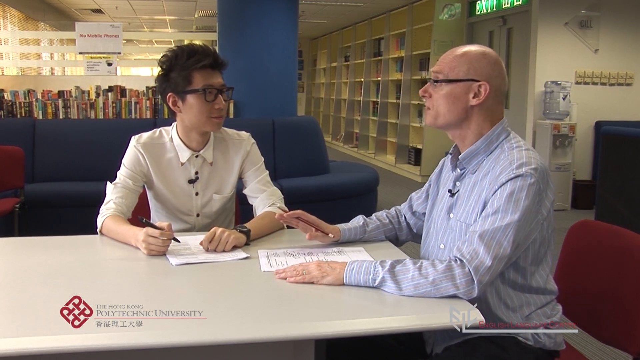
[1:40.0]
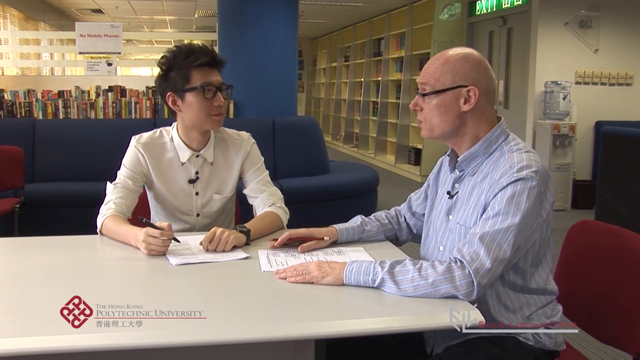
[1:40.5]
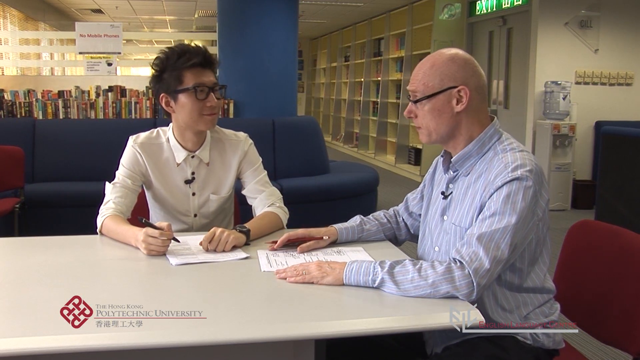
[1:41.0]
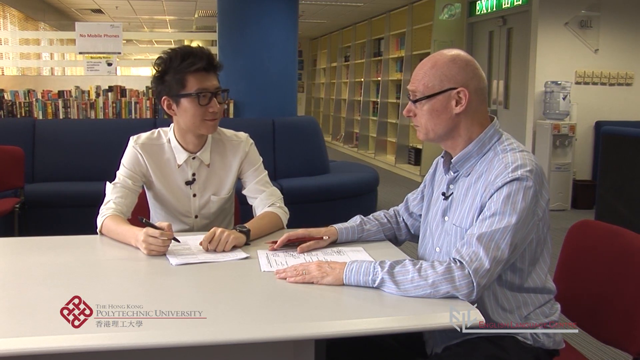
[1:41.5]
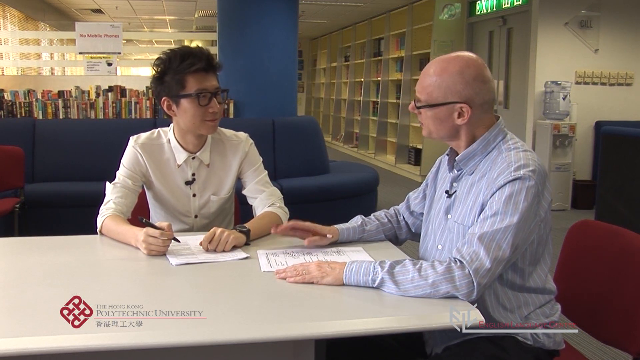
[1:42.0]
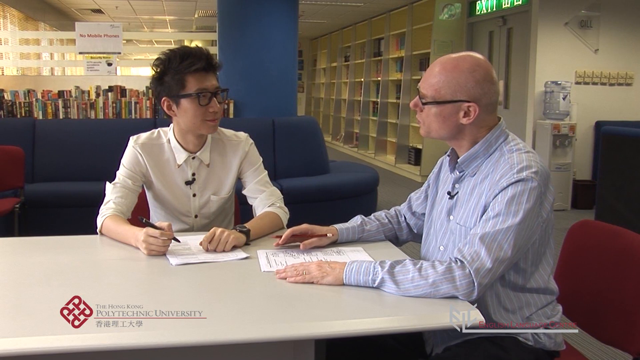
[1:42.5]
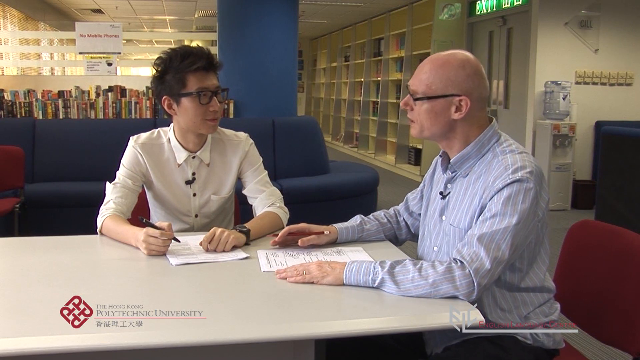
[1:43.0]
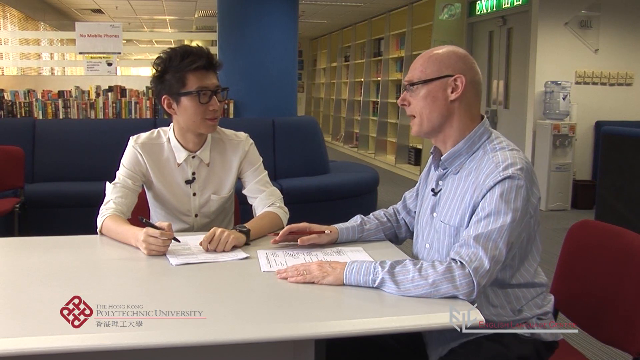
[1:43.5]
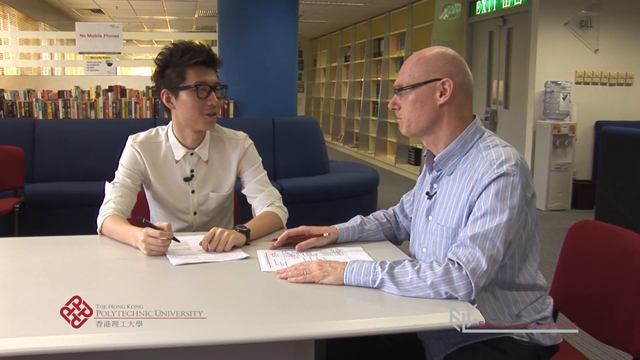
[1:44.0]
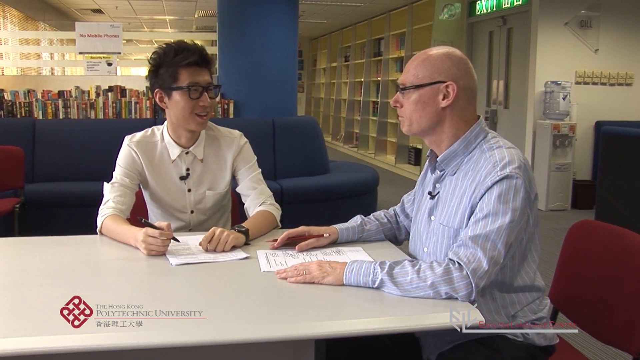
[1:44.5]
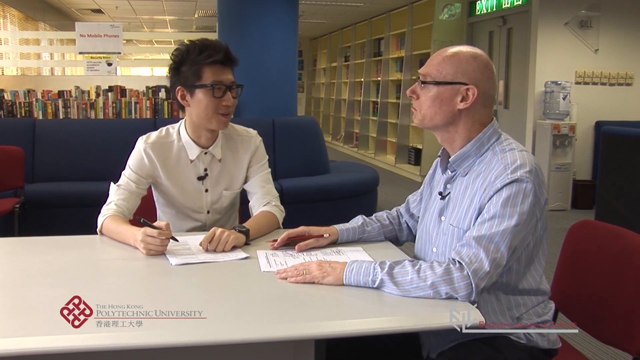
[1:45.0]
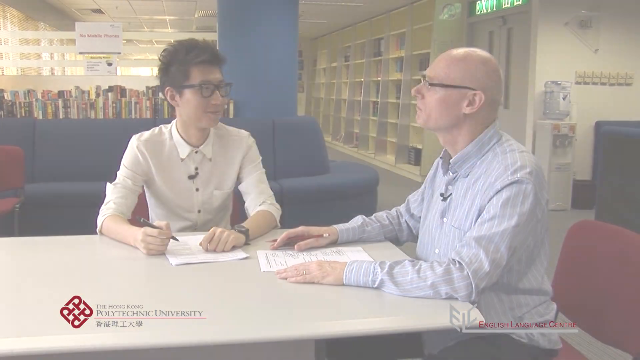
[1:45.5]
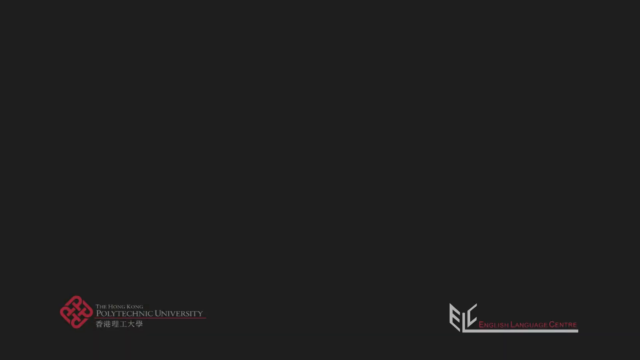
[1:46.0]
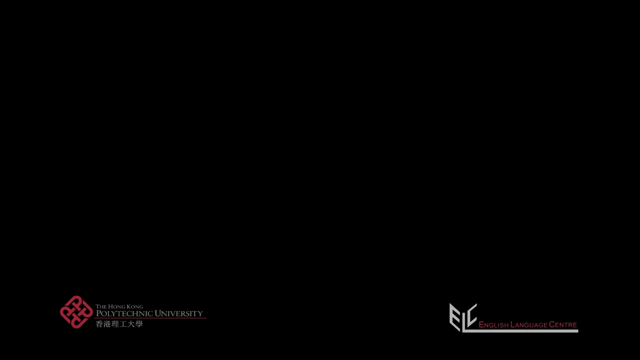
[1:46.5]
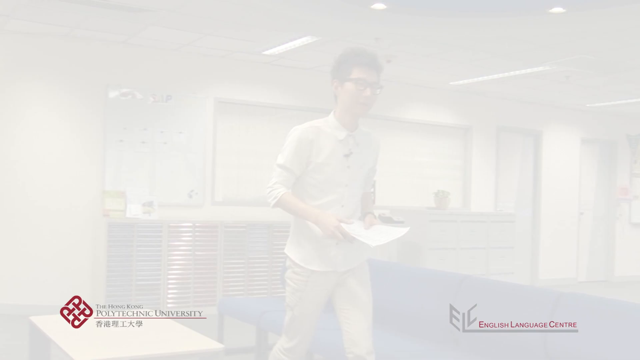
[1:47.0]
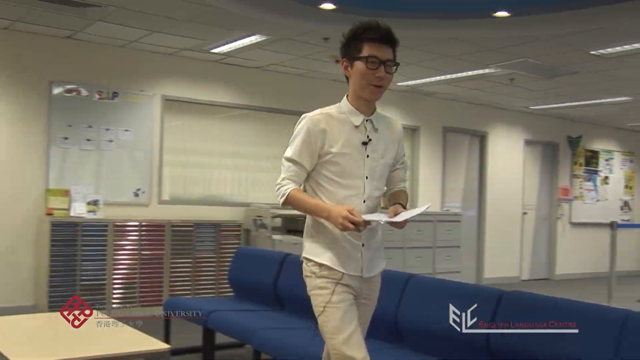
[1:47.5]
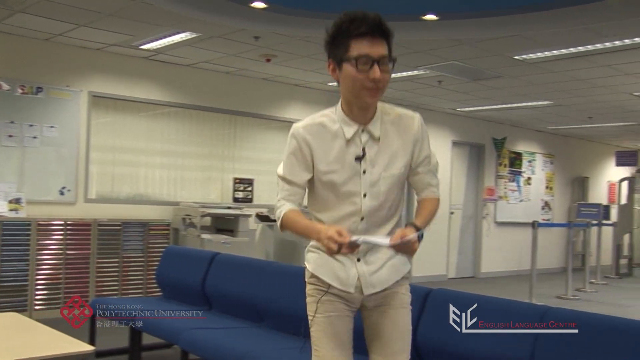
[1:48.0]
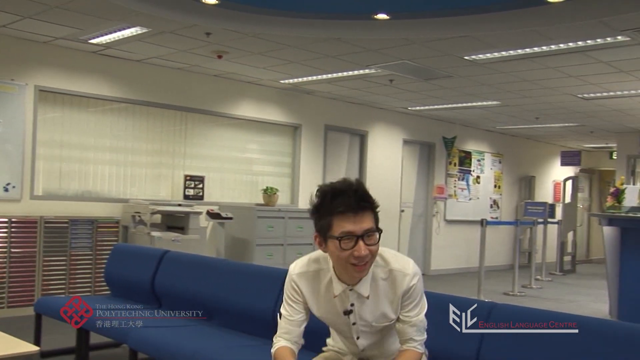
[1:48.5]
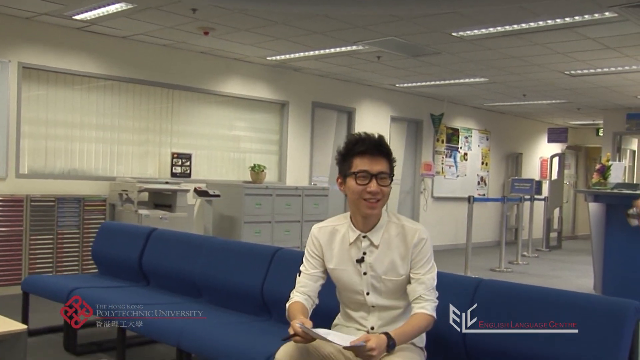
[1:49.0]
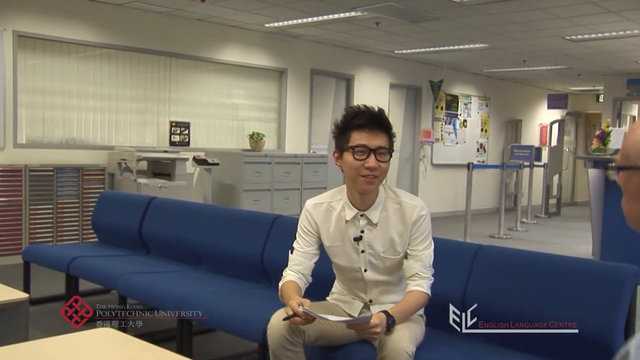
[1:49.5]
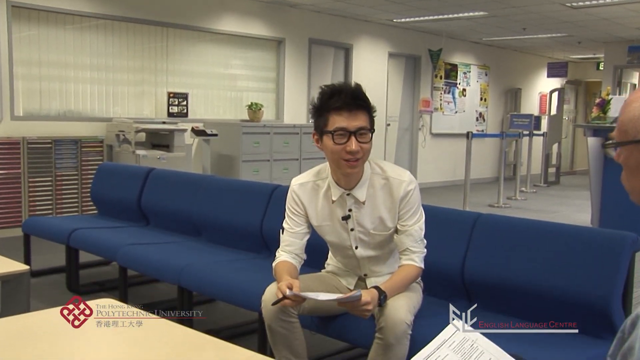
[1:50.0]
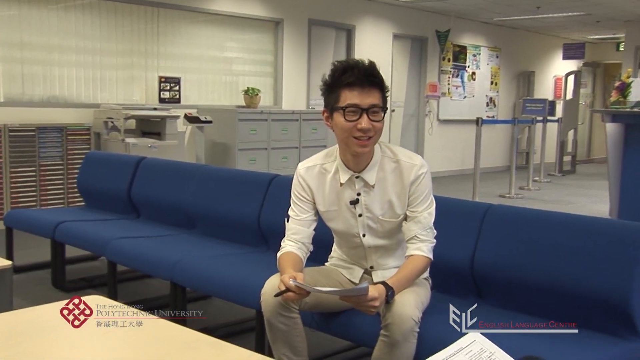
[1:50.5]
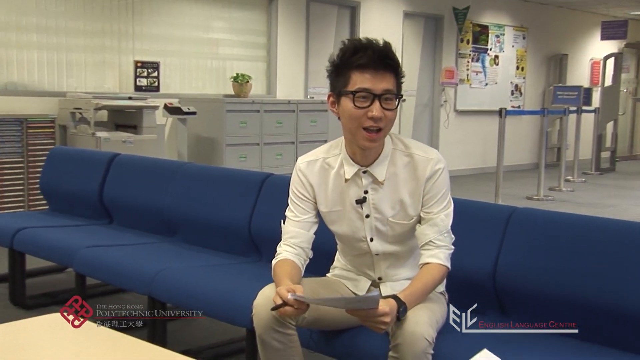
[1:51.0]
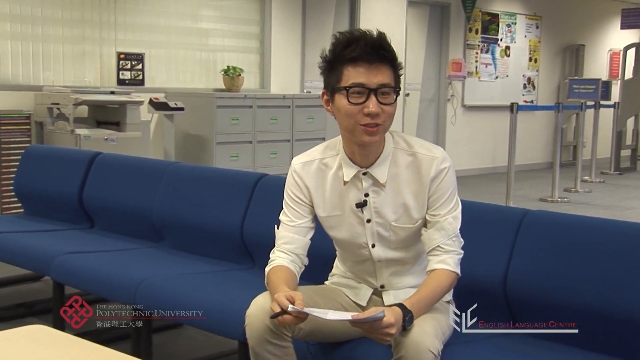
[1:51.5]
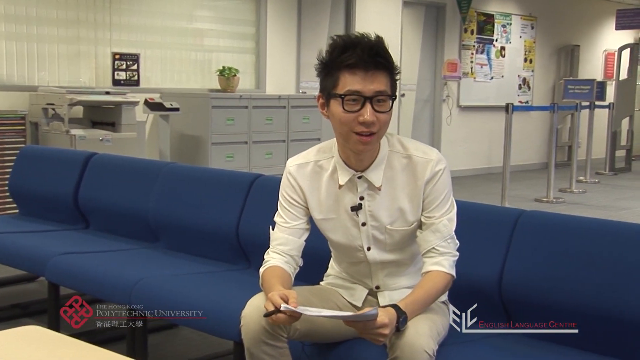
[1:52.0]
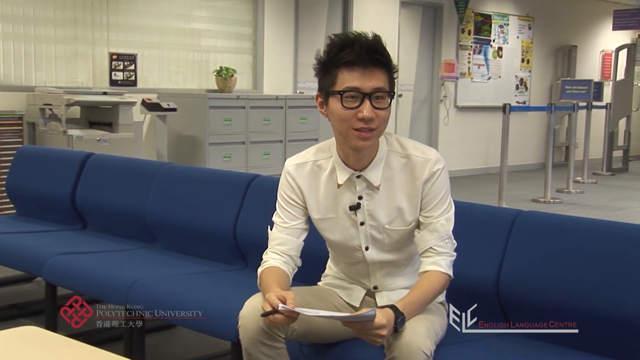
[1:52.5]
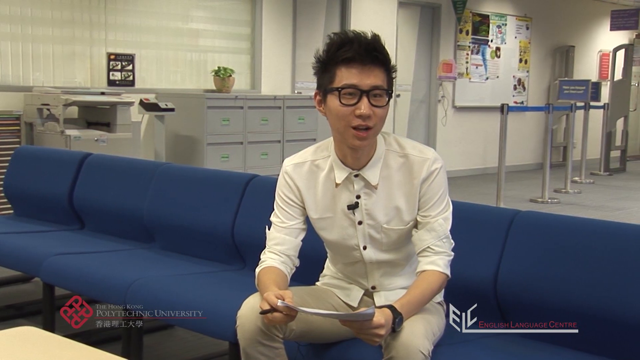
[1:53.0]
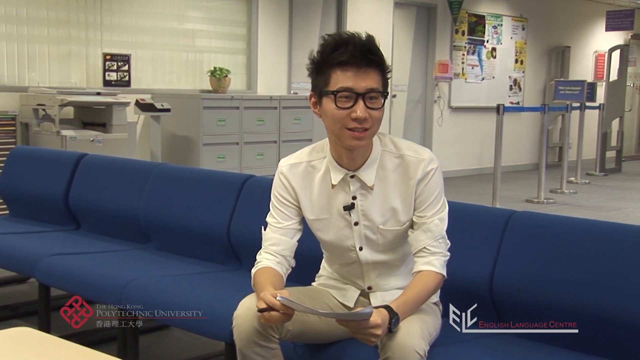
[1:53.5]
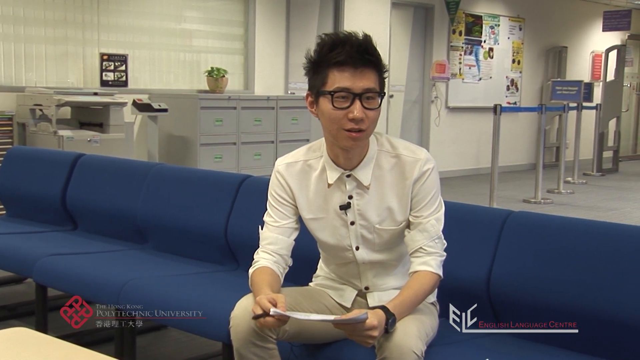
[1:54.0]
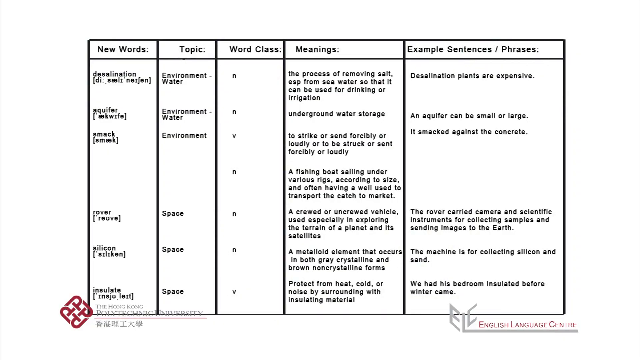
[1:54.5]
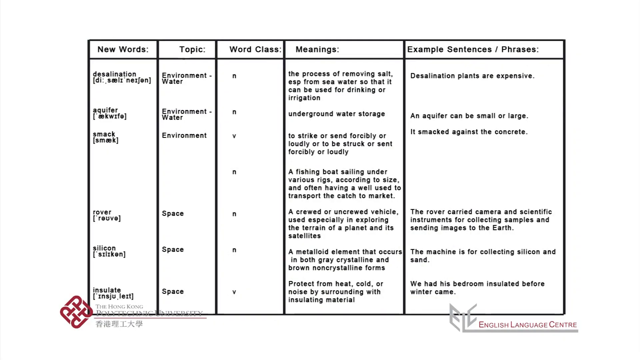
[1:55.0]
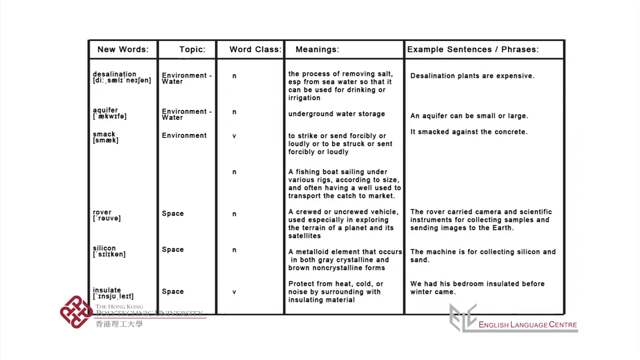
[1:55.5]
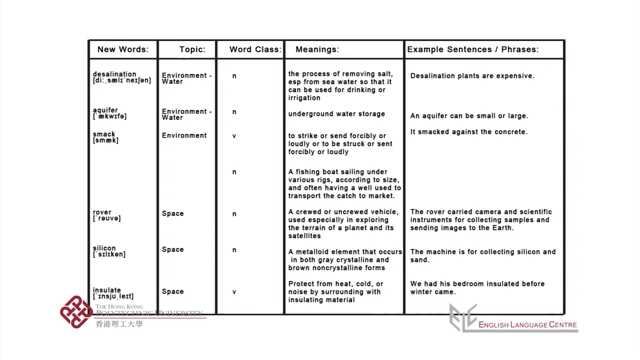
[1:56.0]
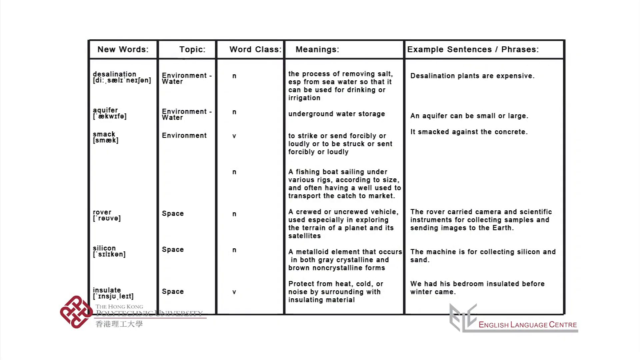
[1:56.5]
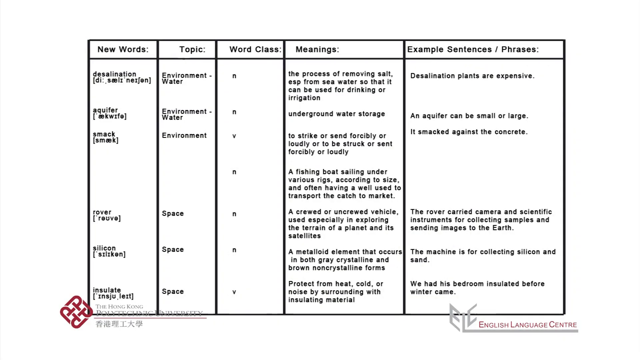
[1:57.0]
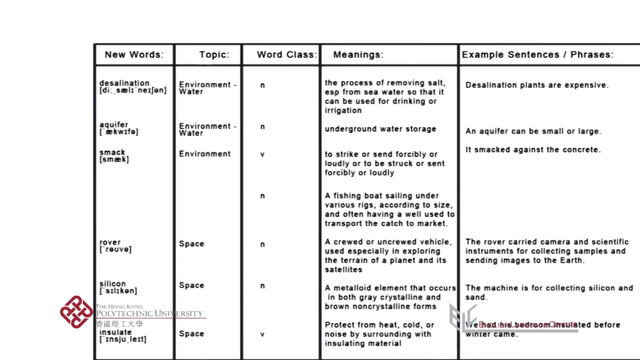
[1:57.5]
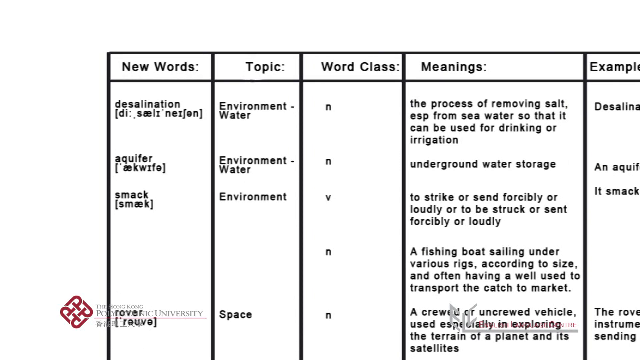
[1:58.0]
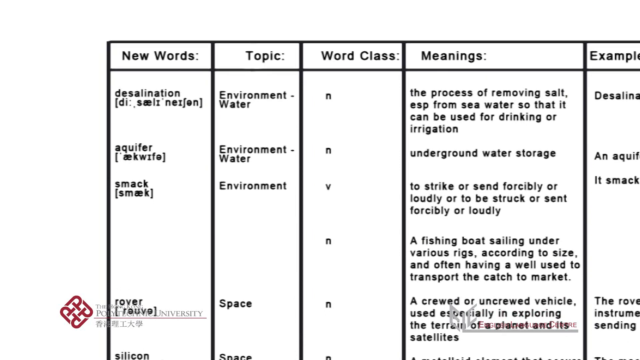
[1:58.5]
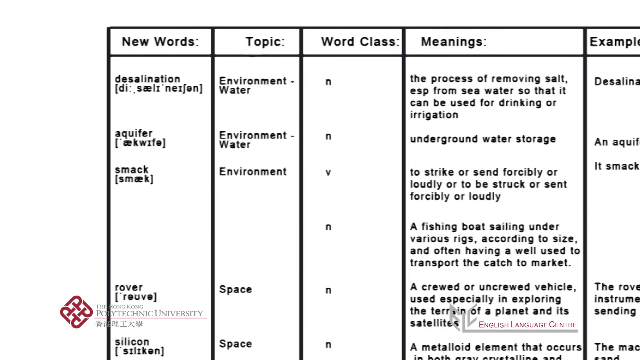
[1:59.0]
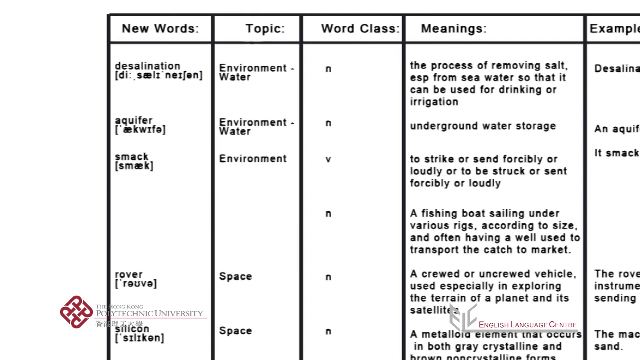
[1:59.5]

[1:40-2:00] A professor and a student are talking in a library. The professor, on the right, is Caucasian with a bald head; the student, on the left, is Asian with lots of black hair. Both wear long-sleeved shirts, but the student's sleeves are rolled up. Each has a paper in front of them that they are working on; the professor holds a pencil in his right hand and the student a pen in his right hand. They are sitting at a table having a conversation. The student listens to the professor, nods, and smiles. Then the student walks through the library past a row of connected blue chairs and sits down on one of them, facing the professor and talking to him. The student's paper has five columns: new words, topic, word class, meanings, and example sentences or phrases. The rows list the words desalination, aquifer, smack, rover, silicon, and insulate. For desalination, the pronunciation is given; to its right the topic reads "environment water," the word class indicates a noun, the meaning reads "the process of removing salt, especially from seawater, so that it can be used for drinking or irrigation," and the last column reads "desalination plants are expensive."